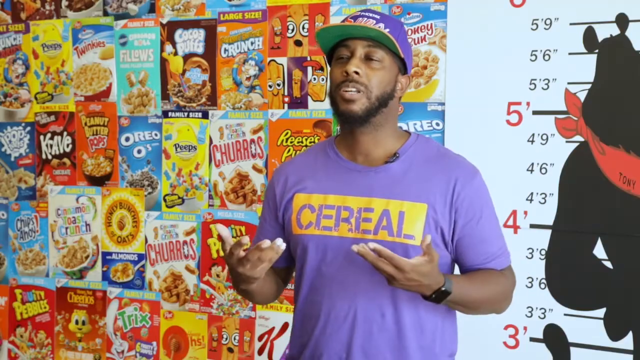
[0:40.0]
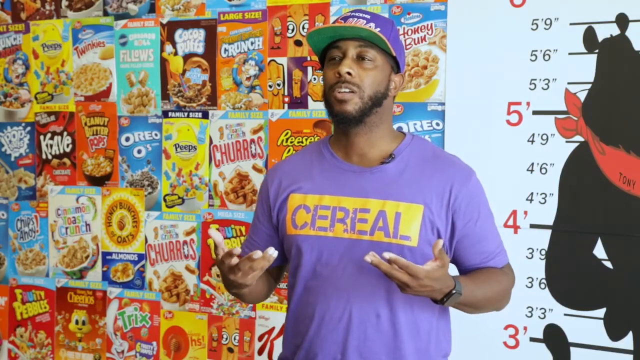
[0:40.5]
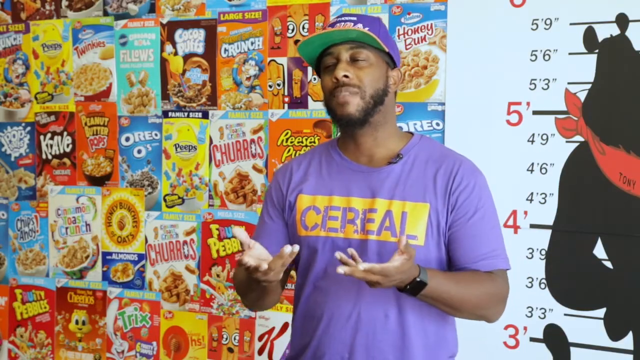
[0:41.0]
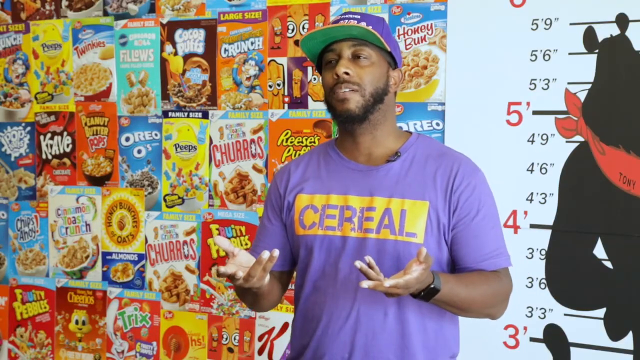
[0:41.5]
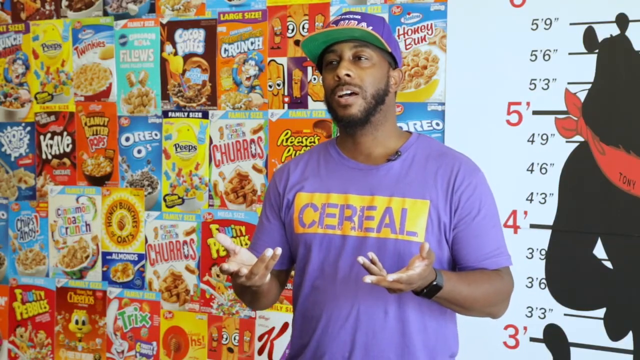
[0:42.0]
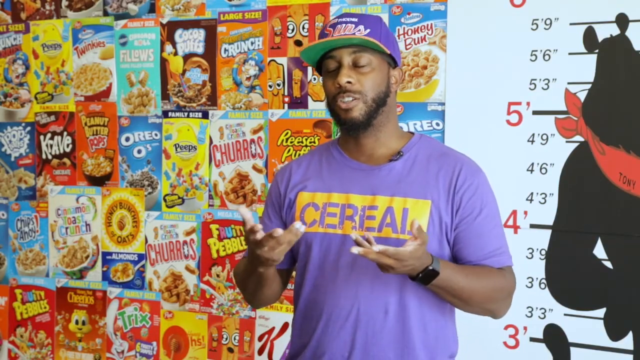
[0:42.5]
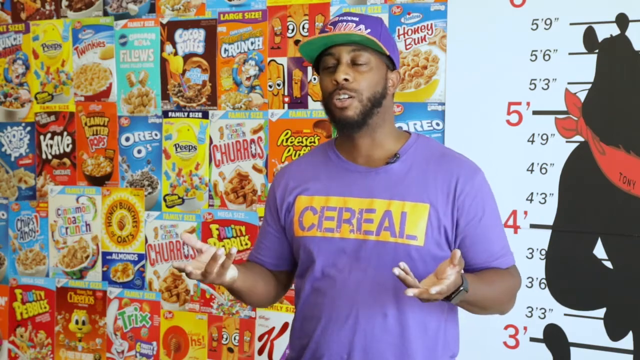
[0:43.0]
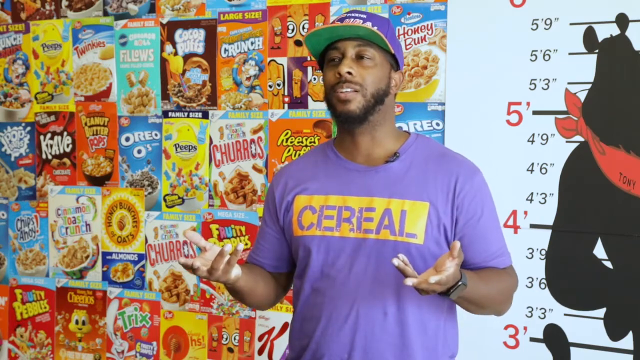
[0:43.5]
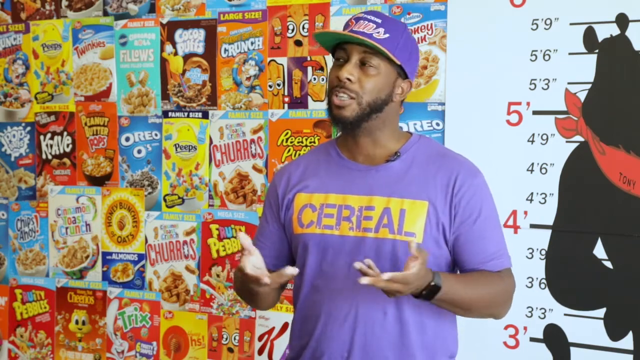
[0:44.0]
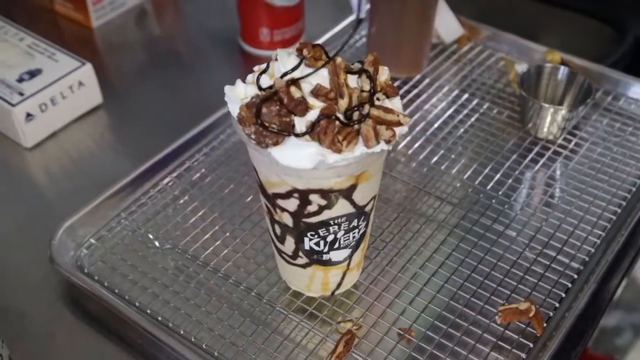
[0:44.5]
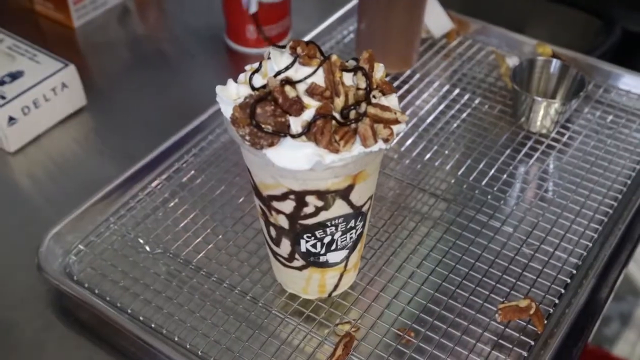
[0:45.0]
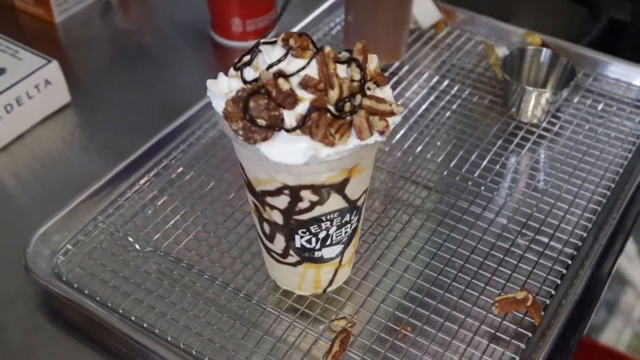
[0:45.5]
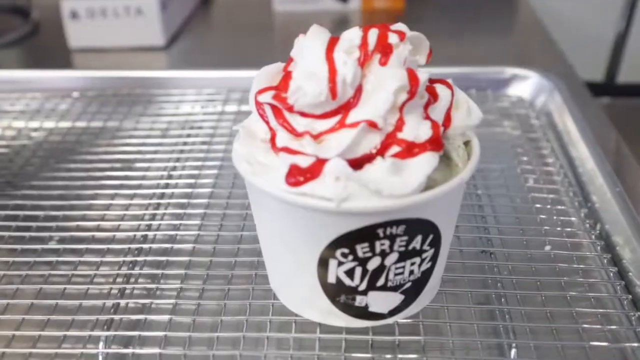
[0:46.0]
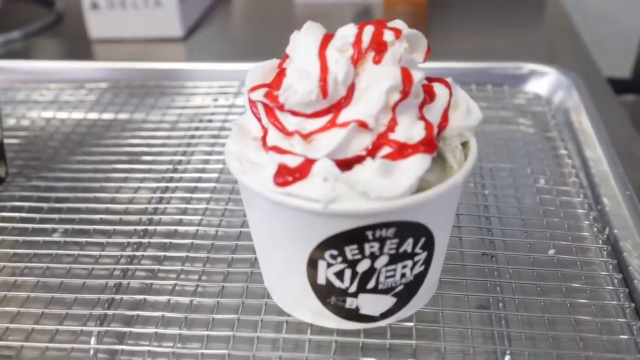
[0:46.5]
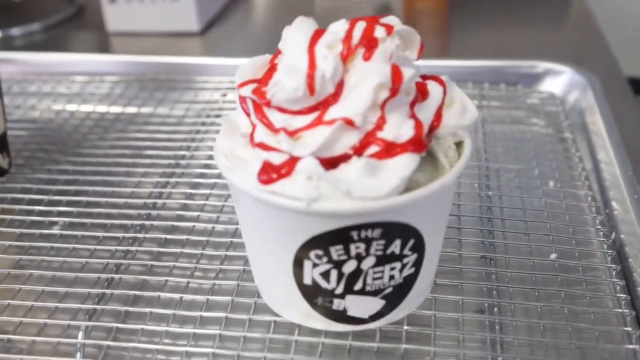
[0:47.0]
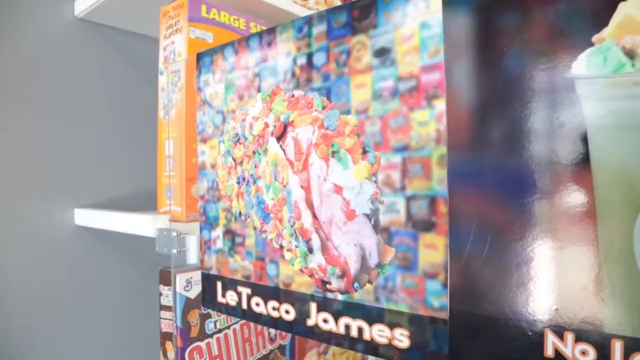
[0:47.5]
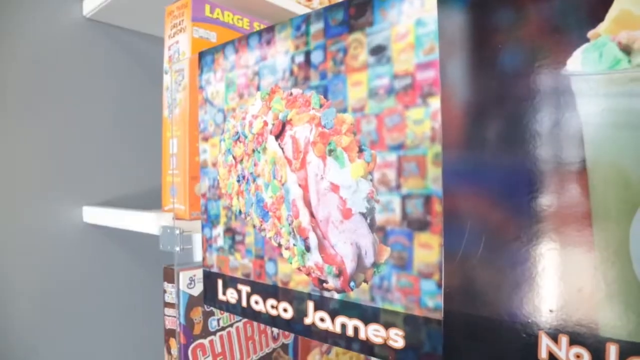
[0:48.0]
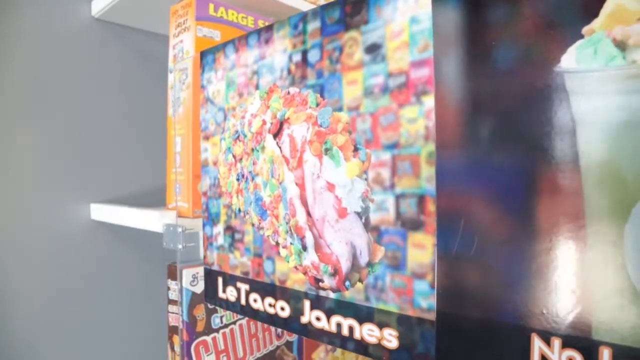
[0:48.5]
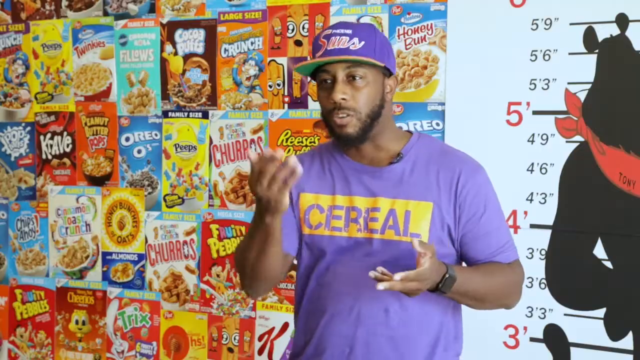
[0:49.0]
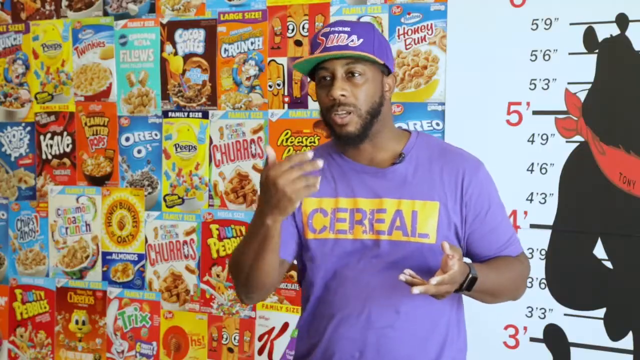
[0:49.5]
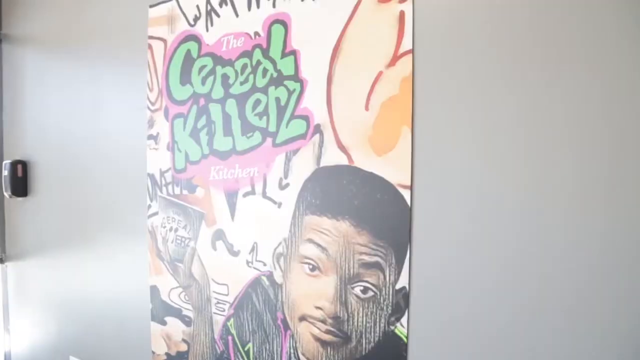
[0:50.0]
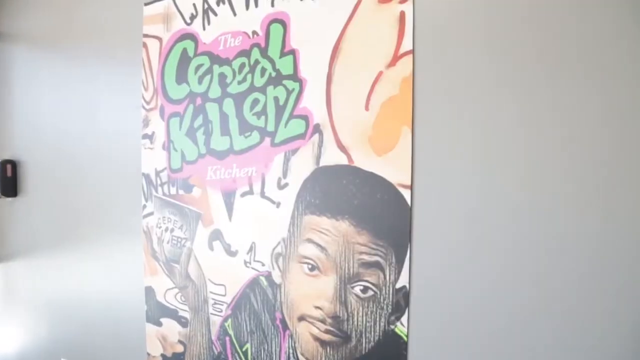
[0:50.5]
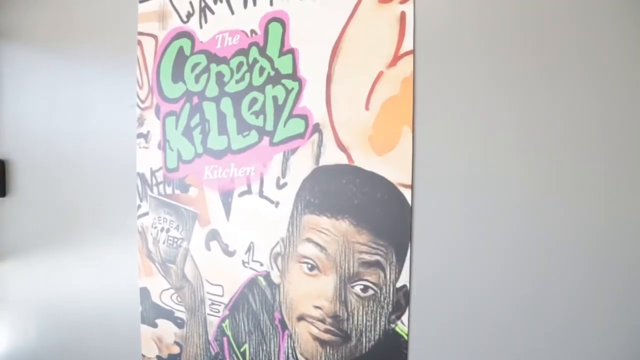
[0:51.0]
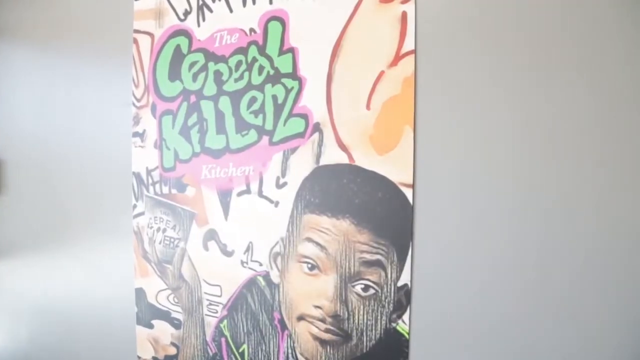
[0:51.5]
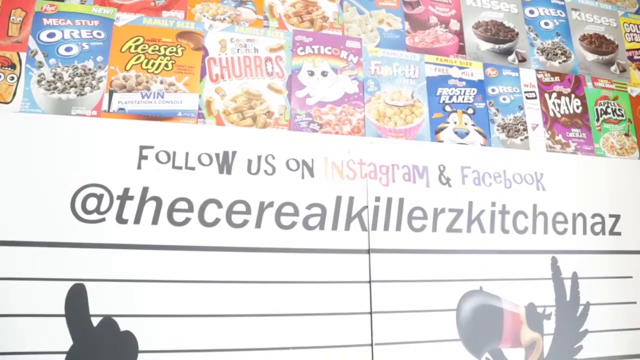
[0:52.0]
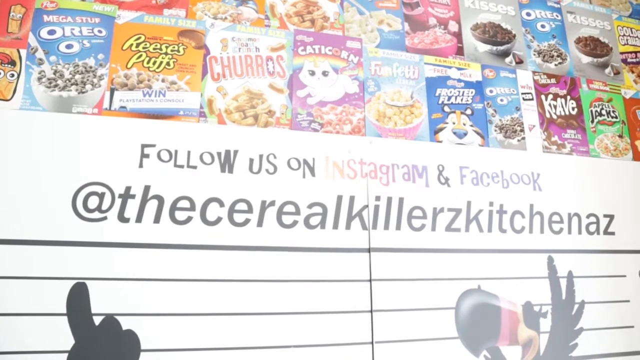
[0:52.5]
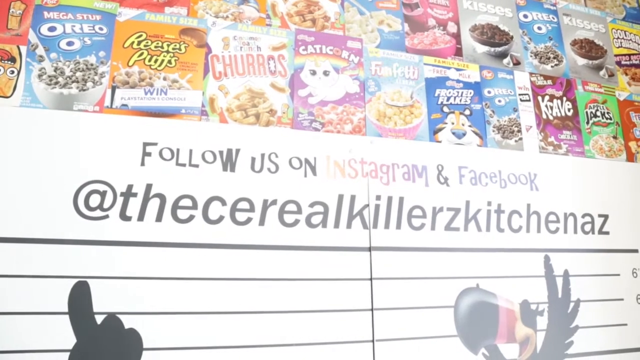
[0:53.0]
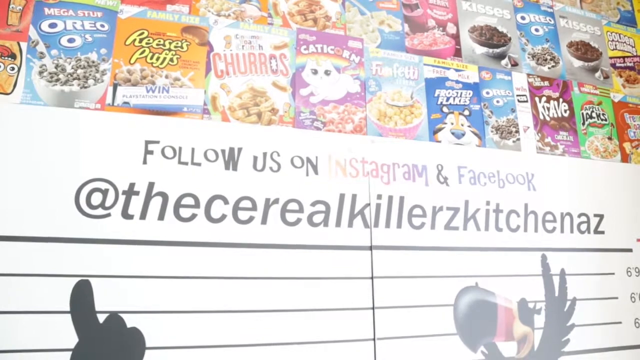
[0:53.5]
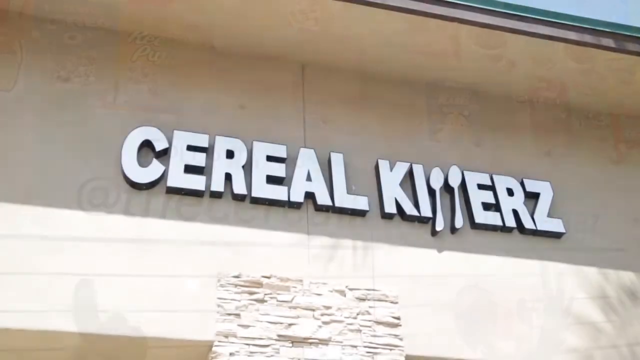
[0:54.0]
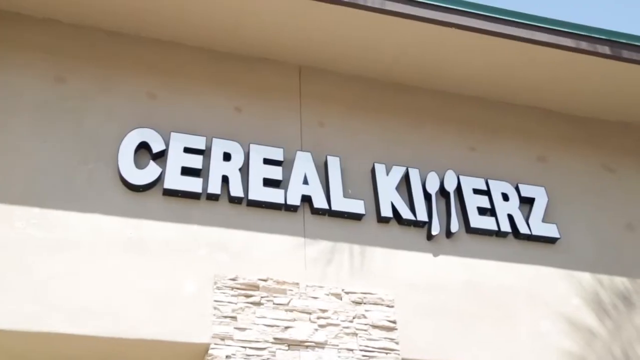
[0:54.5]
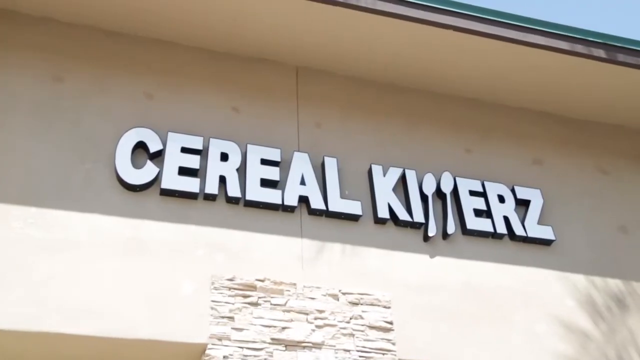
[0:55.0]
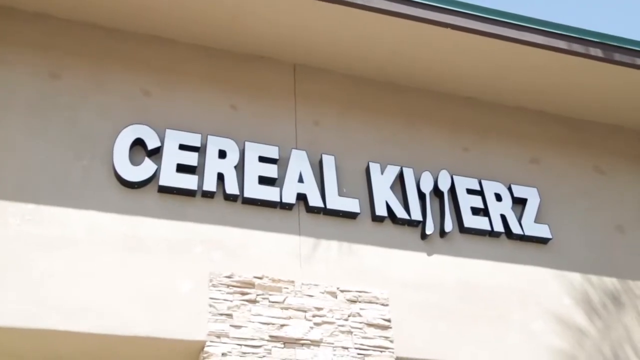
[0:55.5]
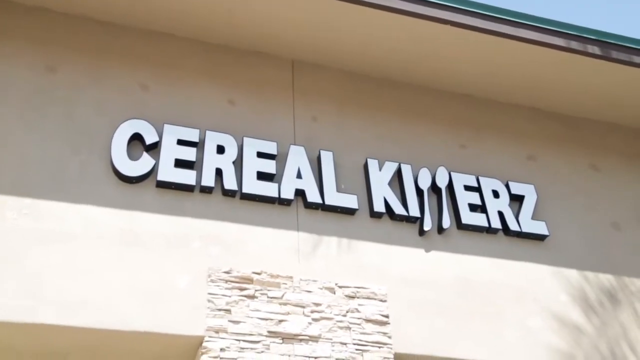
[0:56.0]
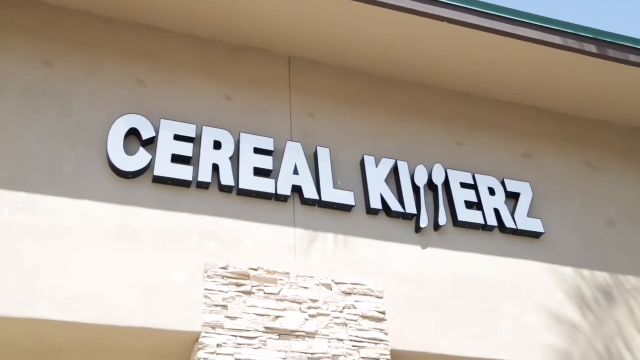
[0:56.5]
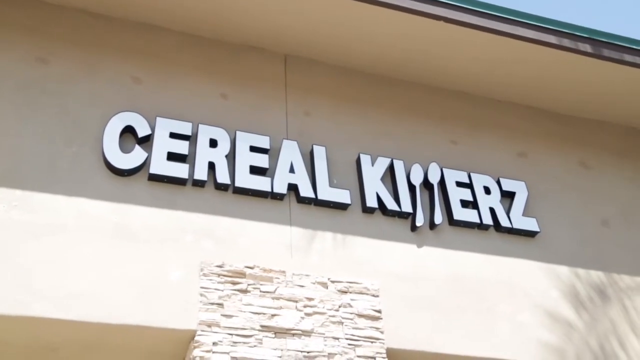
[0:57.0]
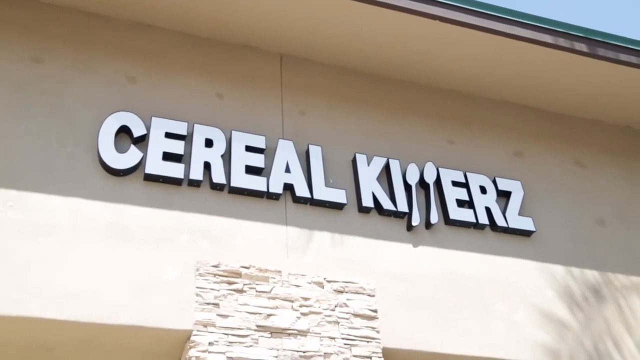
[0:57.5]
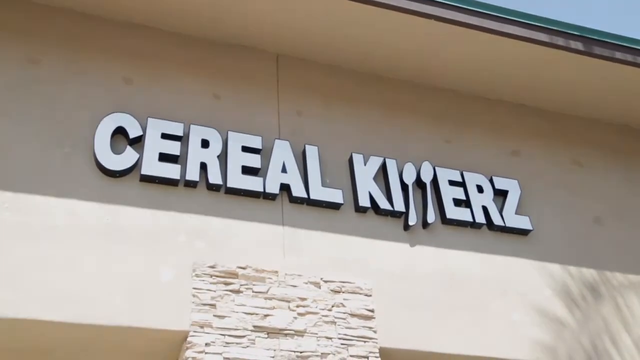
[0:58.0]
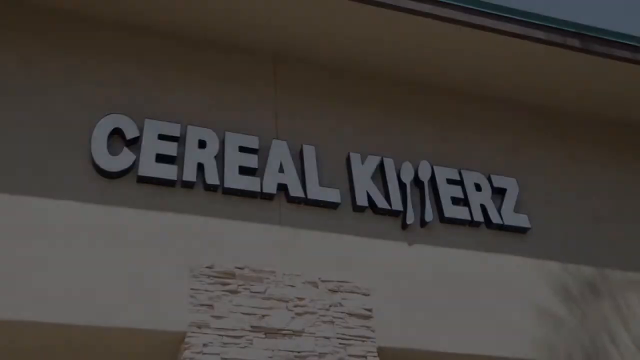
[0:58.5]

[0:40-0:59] The owner of Serial Killers speaks directly to the camera. He wears a purple short-sleeved shirt with the "cereal" logo on it, a purple hat and a wristwatch, and has a microphone attached to the collar or neckline of his t-shirt. He has a full beard and a deeper brown skin tone. He stands in front of images of different cereal brands, including Captain Crunch, Oreo O's, Churros, Cinnamon Toast Crunch, Chips Ahoy and Reese's Puffs. To his right is what looks to be a height chart, beginning at 3'3" at the very bottom and reaching 5'9" at the very top. The dessert-making process follows: chocolate syrup is drizzled on top of one of the finished desserts, and there is what looks to be pretzels. Another dessert looks like strawberry-flavored ice cream. A poster says "the Serial Killers Kitchen," and a view outside the store shows the logo placed on it.